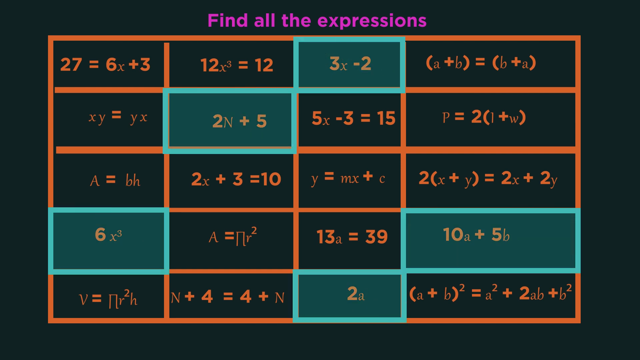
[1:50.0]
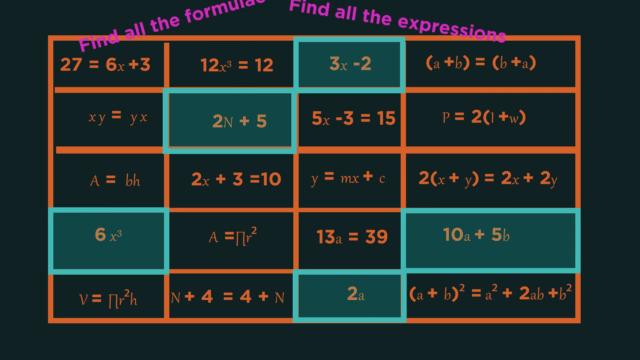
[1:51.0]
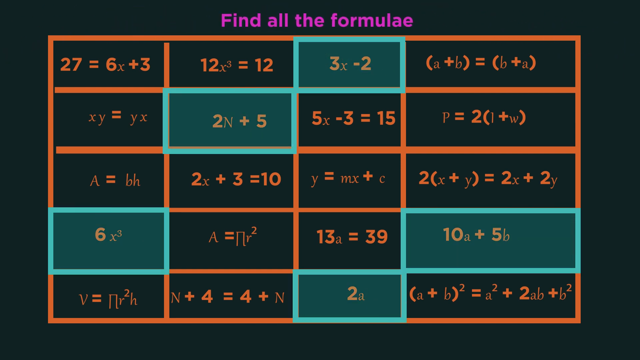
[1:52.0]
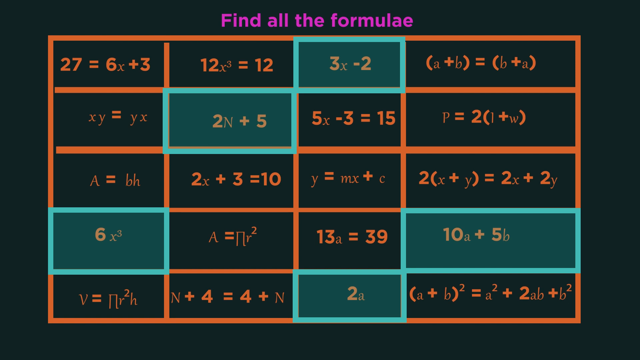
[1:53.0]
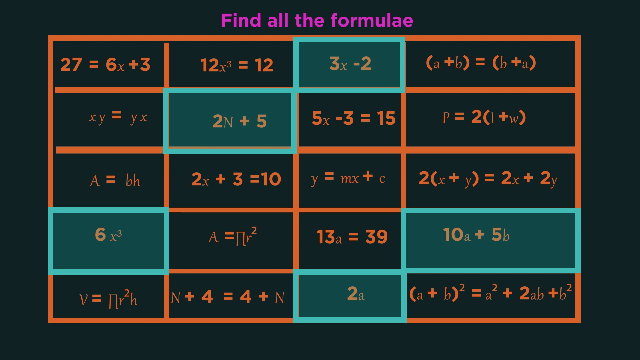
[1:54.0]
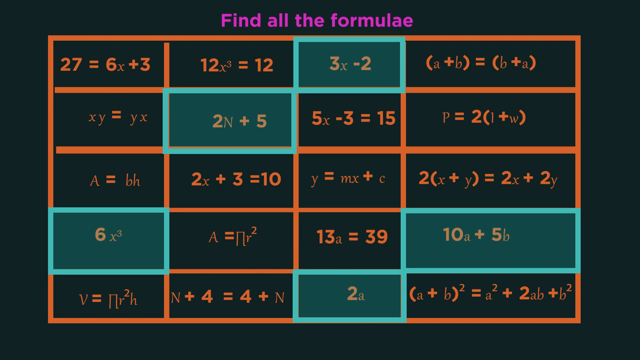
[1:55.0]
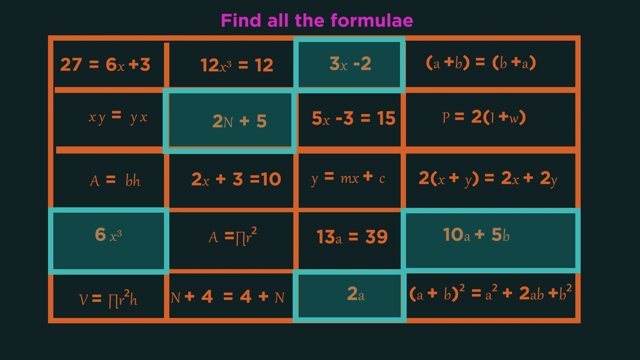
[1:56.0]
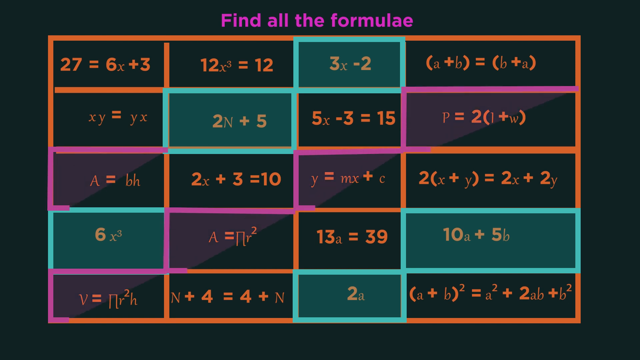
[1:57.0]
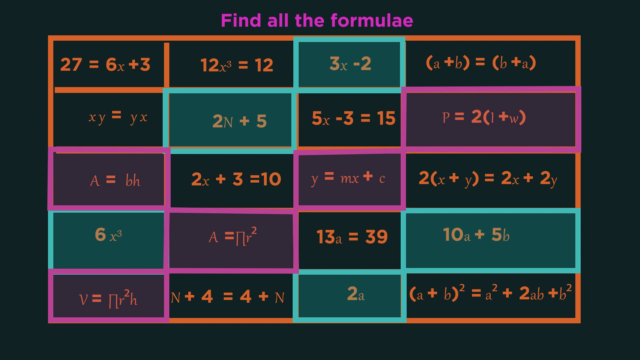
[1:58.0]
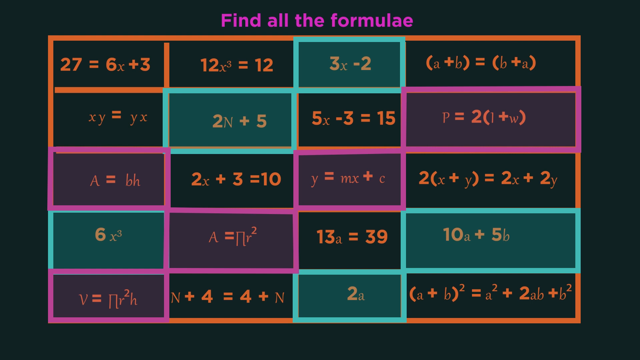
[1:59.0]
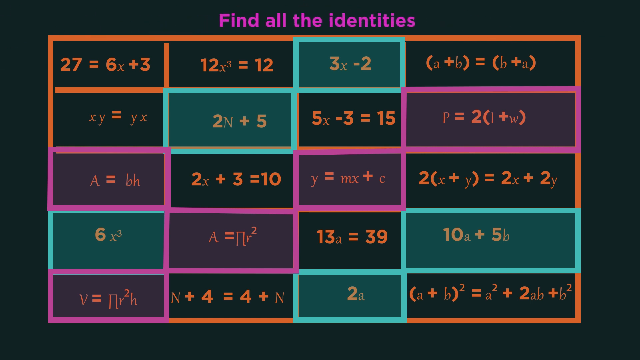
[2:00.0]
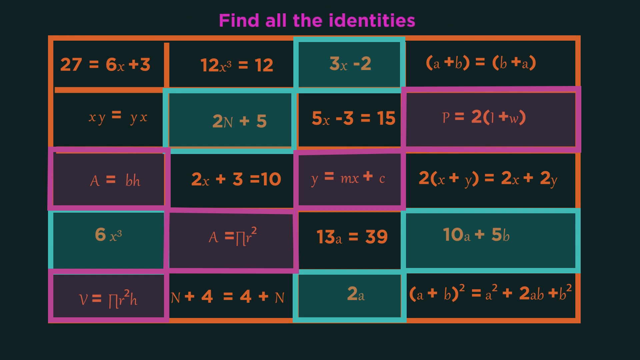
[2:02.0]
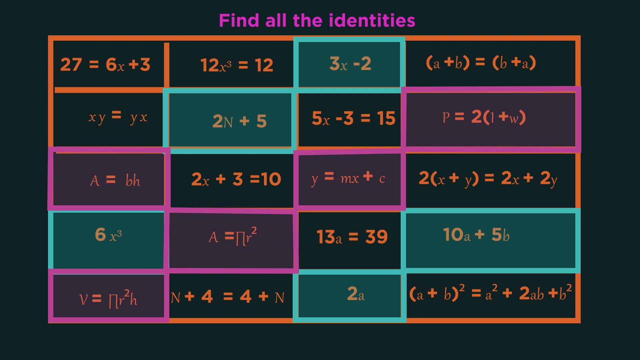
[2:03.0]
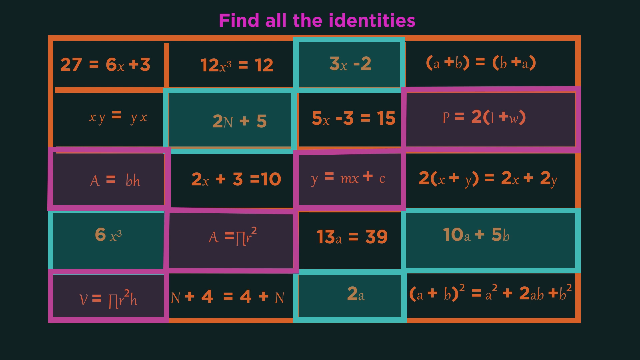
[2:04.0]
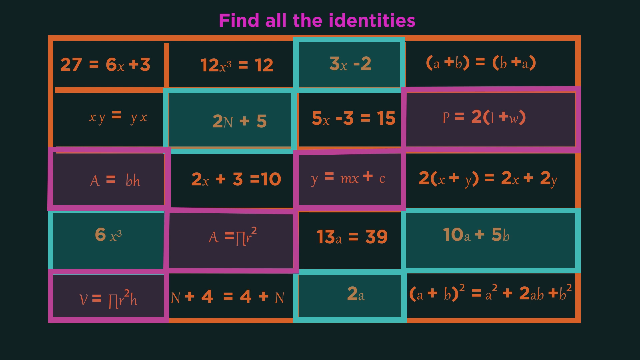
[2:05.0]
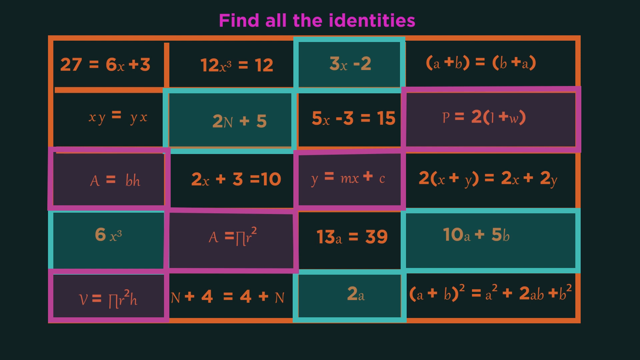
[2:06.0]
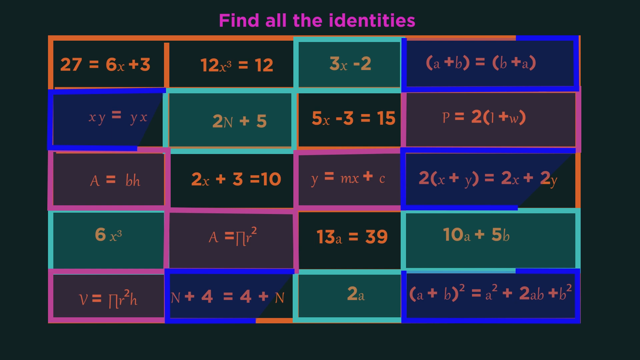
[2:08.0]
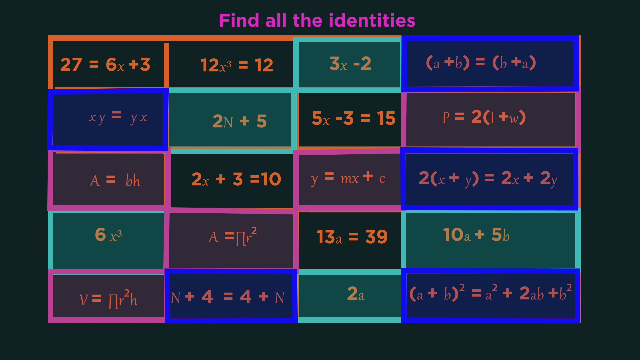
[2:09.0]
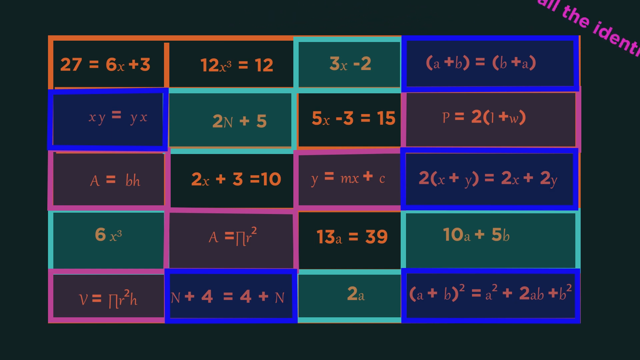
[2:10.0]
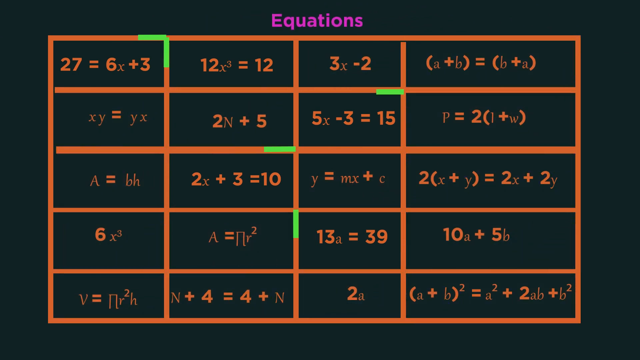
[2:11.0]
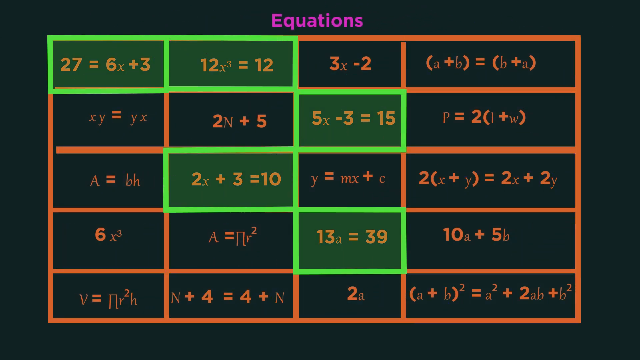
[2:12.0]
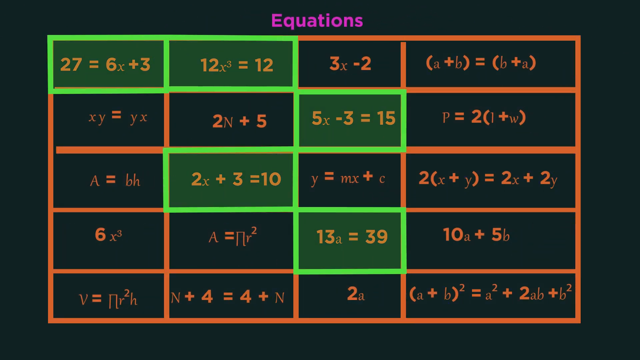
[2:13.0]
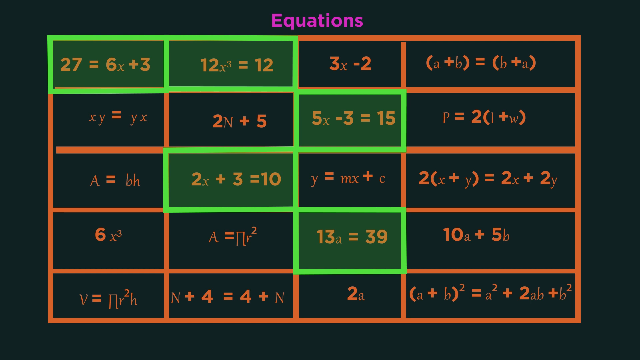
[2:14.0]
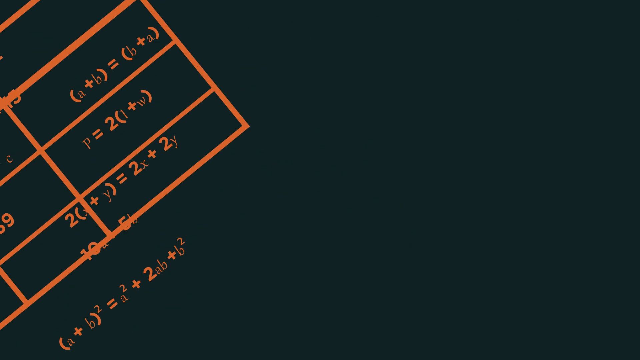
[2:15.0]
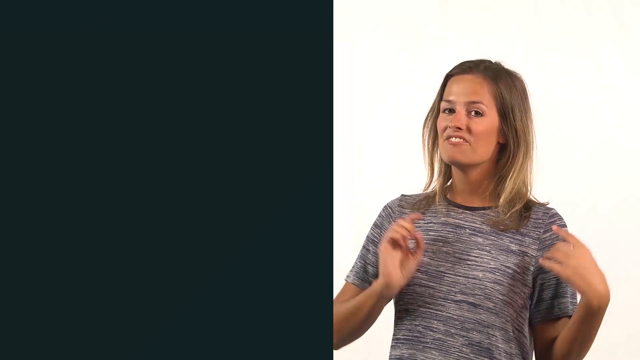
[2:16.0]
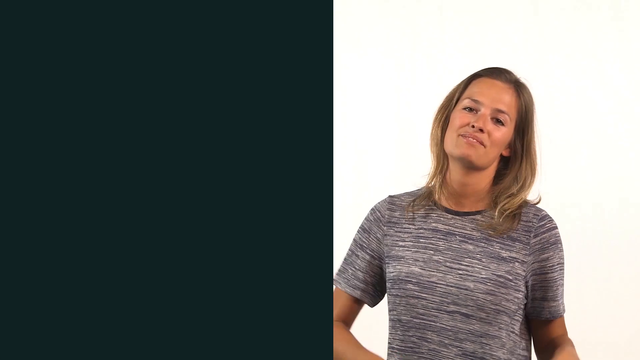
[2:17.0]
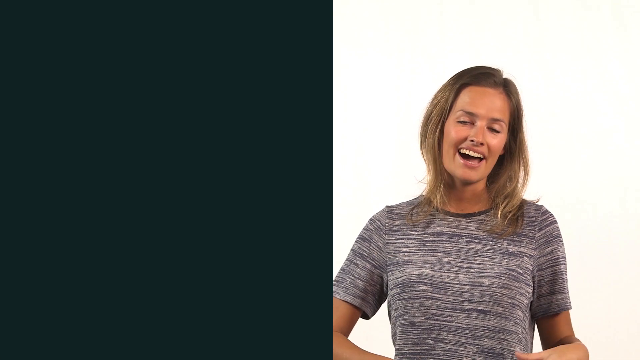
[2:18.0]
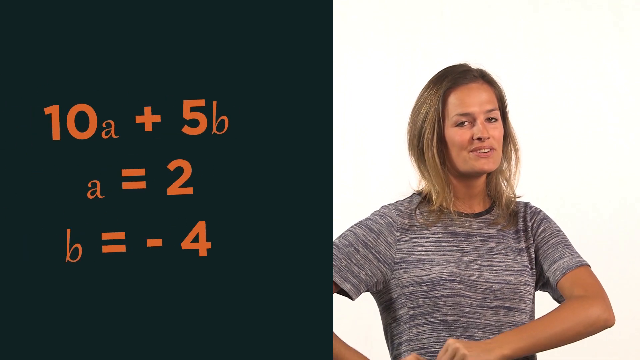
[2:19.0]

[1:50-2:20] On the grid titled "find all the expressions", green boxes highlight certain equations. New pink text reads "find all the formulae", and pink boxes highlight certain equations along with the green boxes. The grid has orange outlining and many equations, with five boxes highlighted in green. The title then changes to "find all the identities" in pink, and five blue boxes are highlighted. The screen slides back to the girl in the shirt, who looks like she is smiling while speaking. Among the equations are "3x-2", "y equals mx plus c" and "a equals bh".